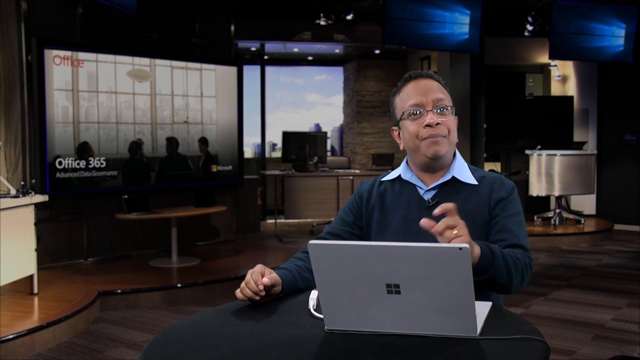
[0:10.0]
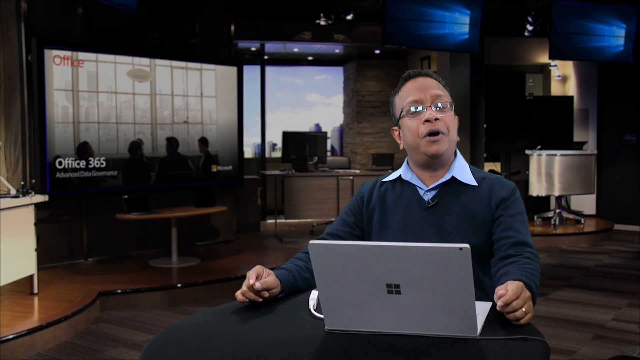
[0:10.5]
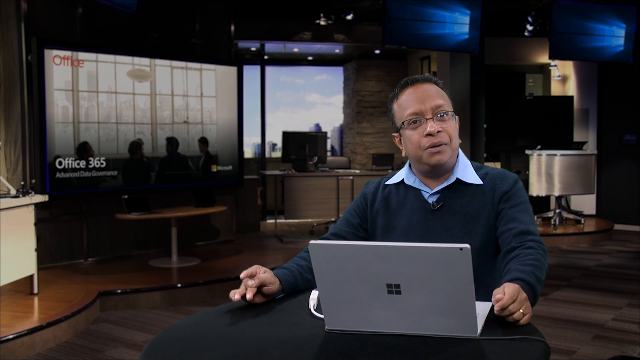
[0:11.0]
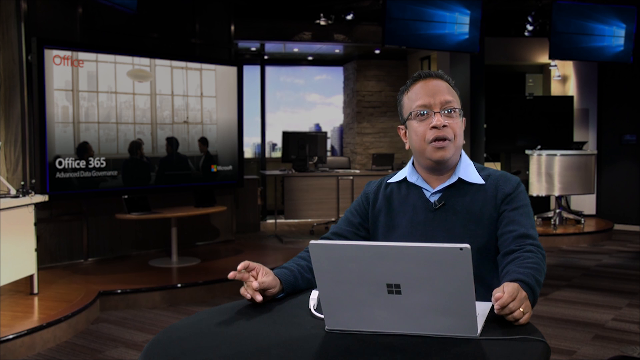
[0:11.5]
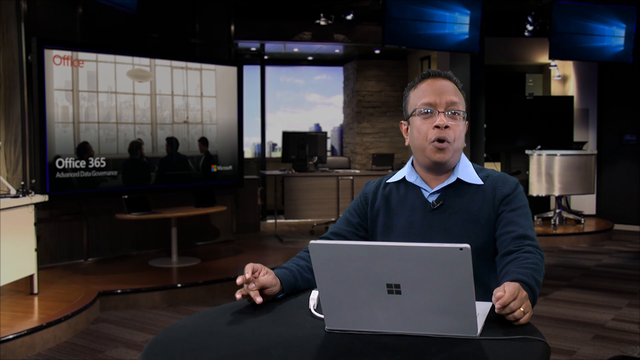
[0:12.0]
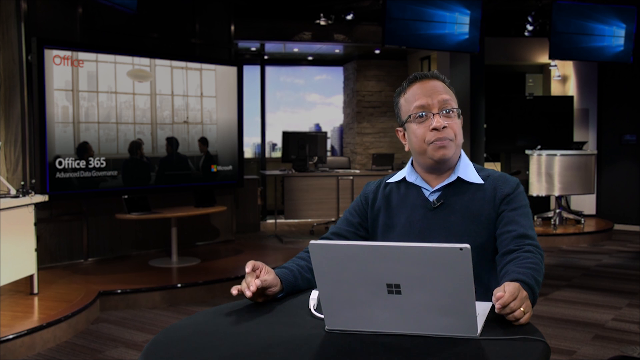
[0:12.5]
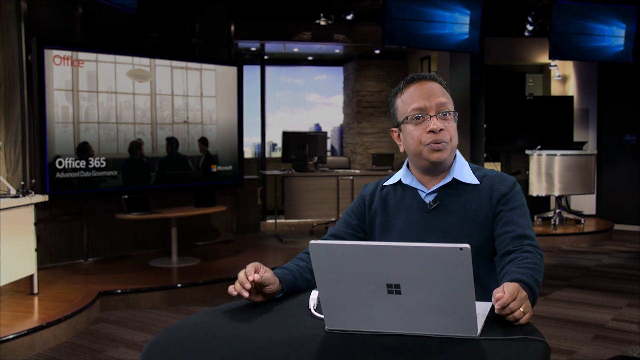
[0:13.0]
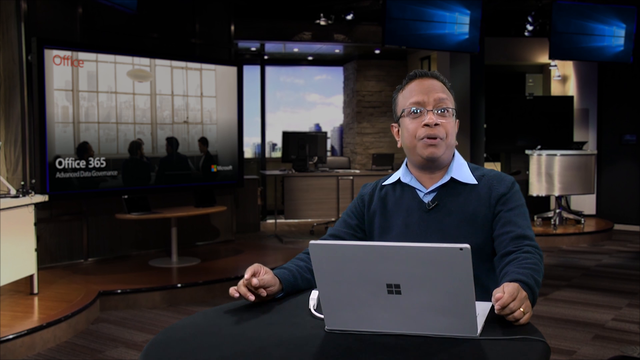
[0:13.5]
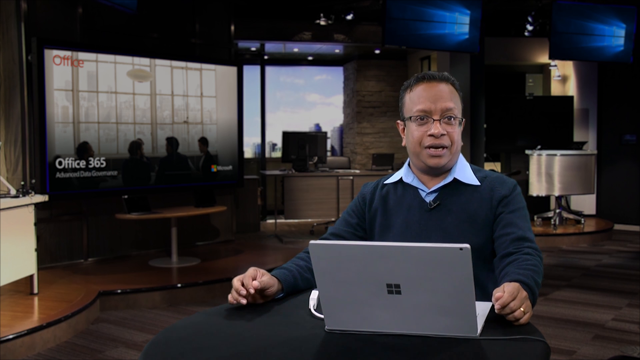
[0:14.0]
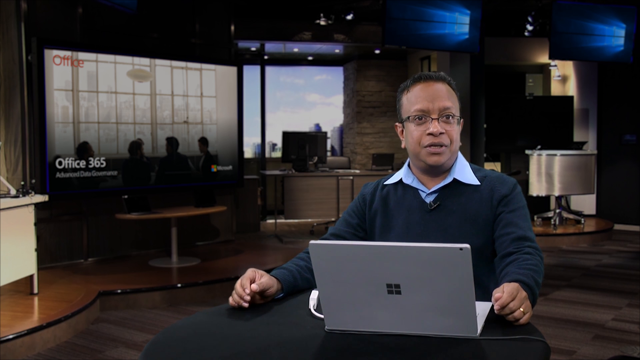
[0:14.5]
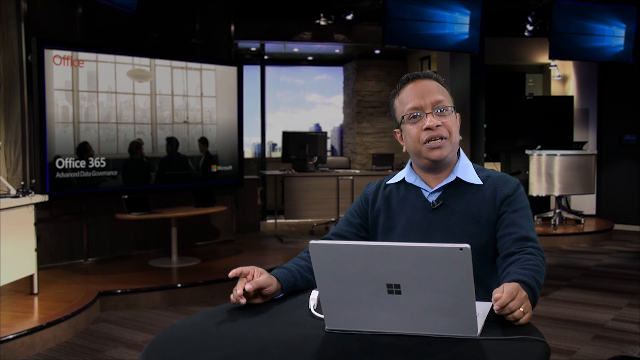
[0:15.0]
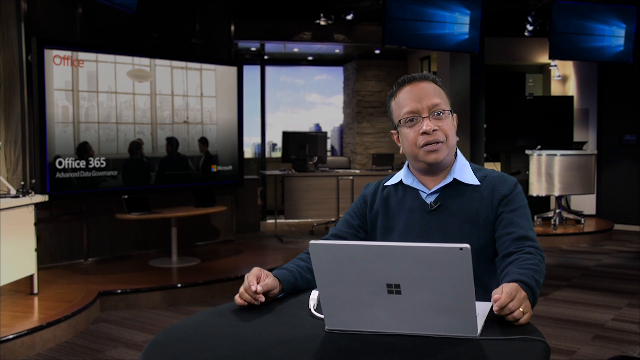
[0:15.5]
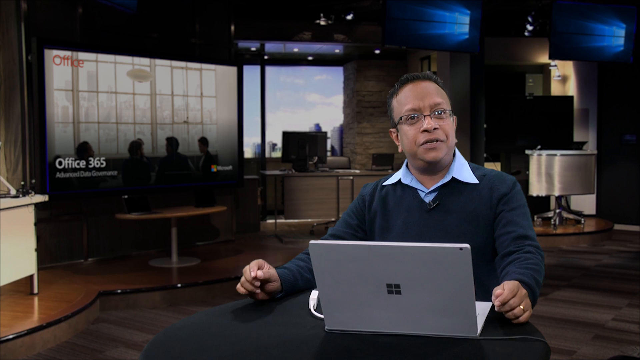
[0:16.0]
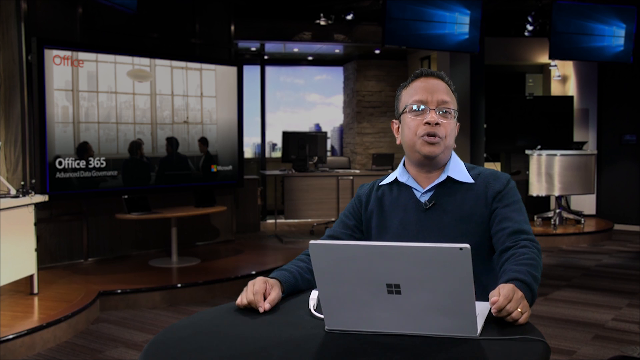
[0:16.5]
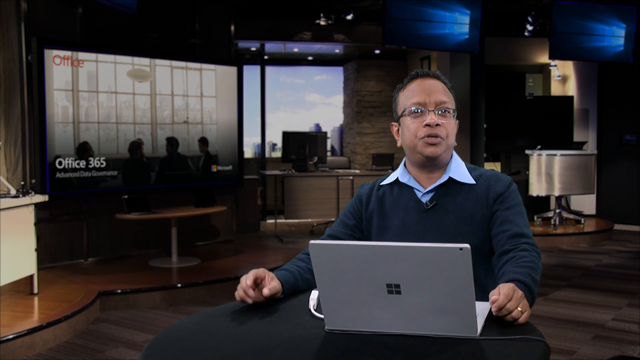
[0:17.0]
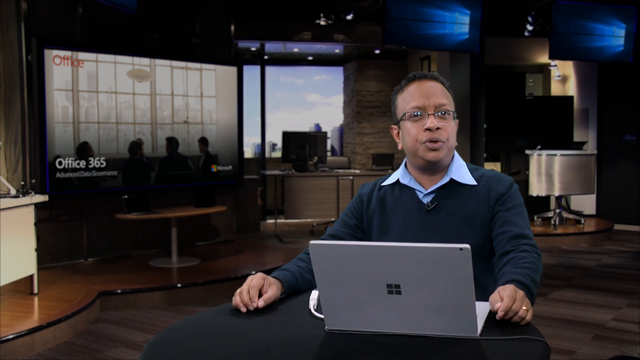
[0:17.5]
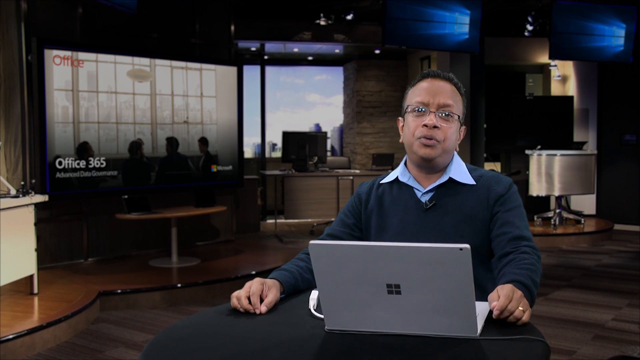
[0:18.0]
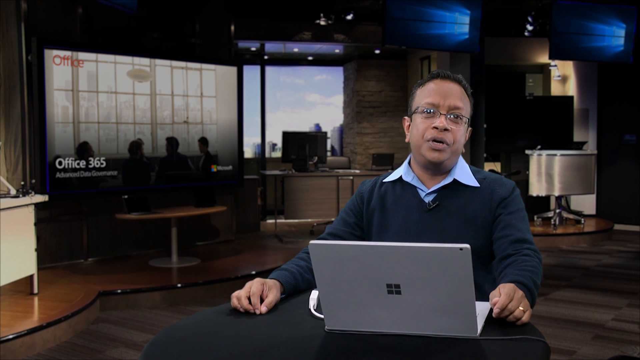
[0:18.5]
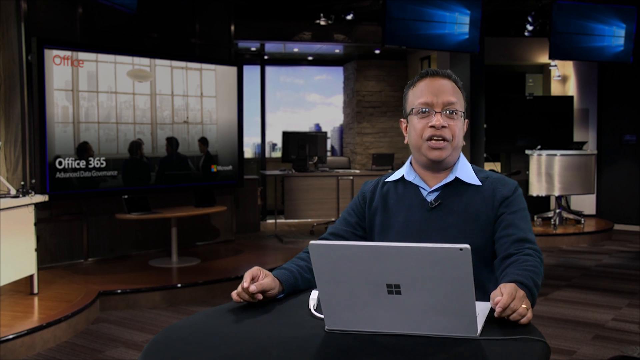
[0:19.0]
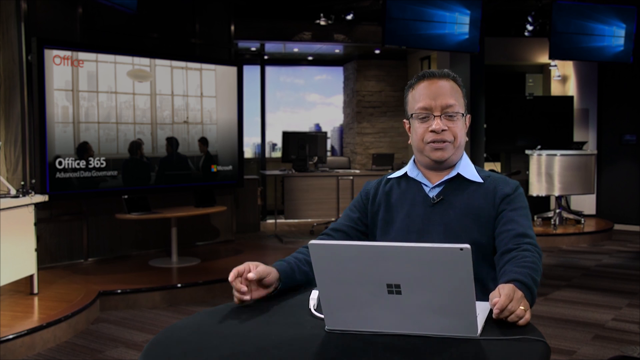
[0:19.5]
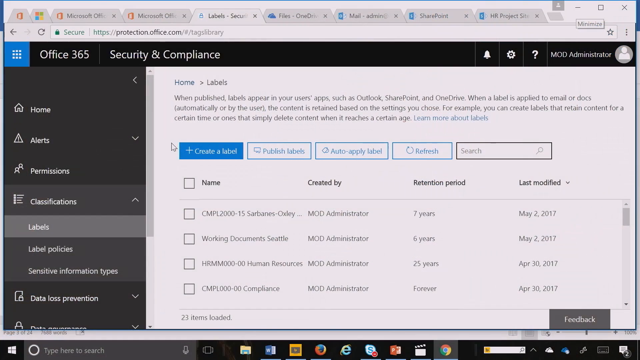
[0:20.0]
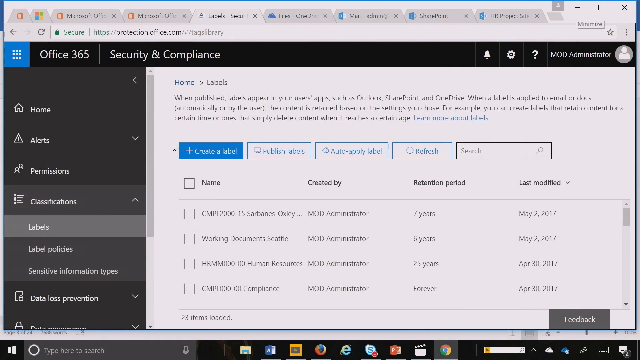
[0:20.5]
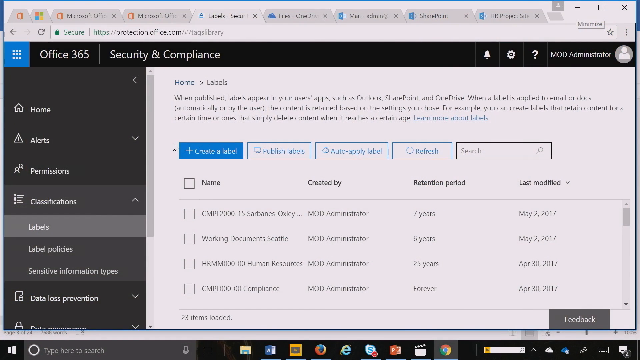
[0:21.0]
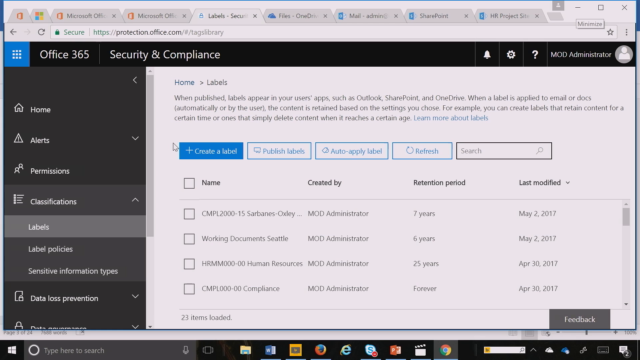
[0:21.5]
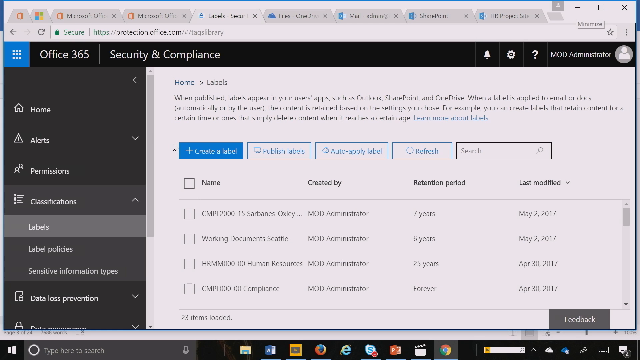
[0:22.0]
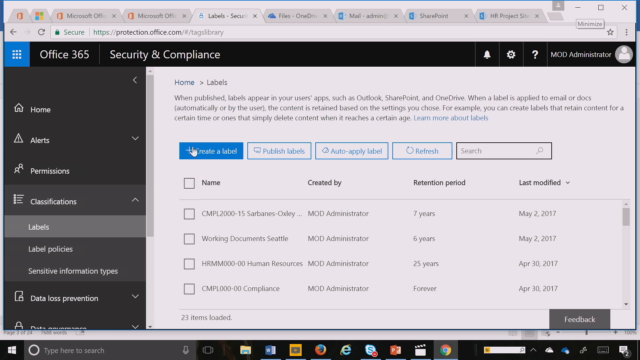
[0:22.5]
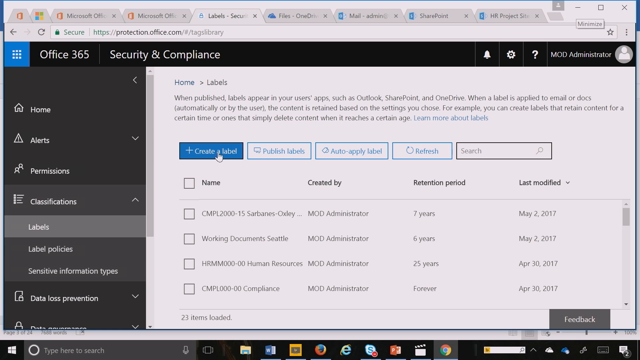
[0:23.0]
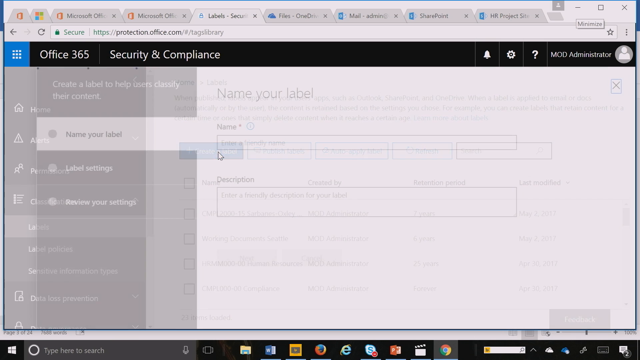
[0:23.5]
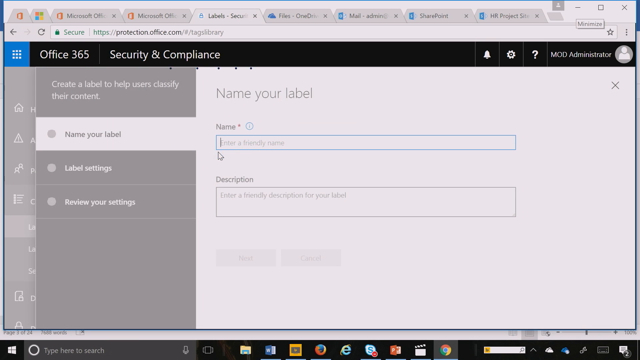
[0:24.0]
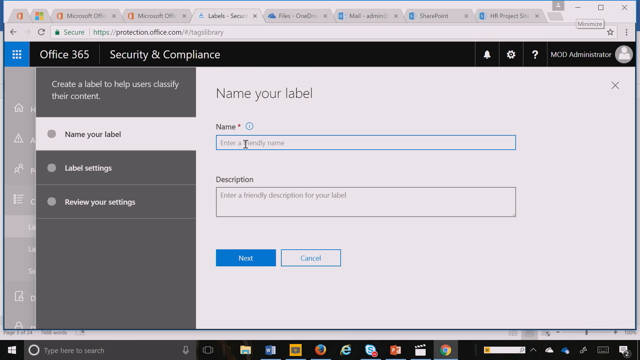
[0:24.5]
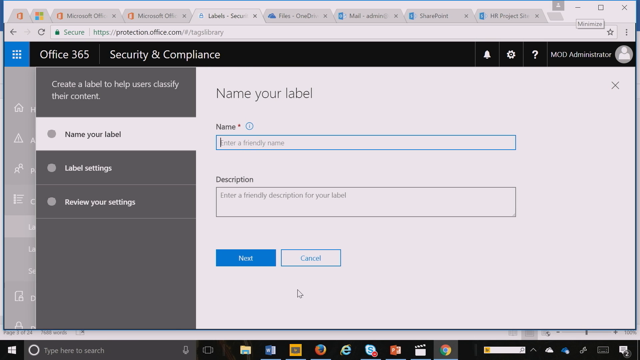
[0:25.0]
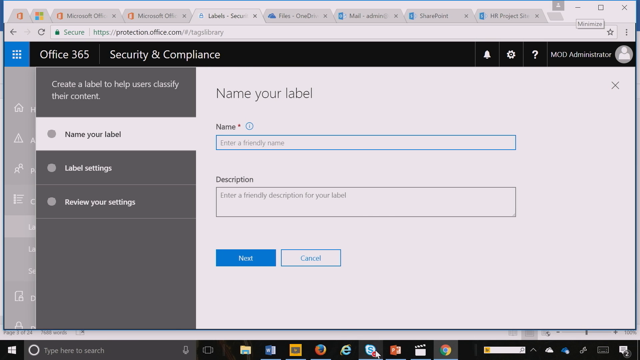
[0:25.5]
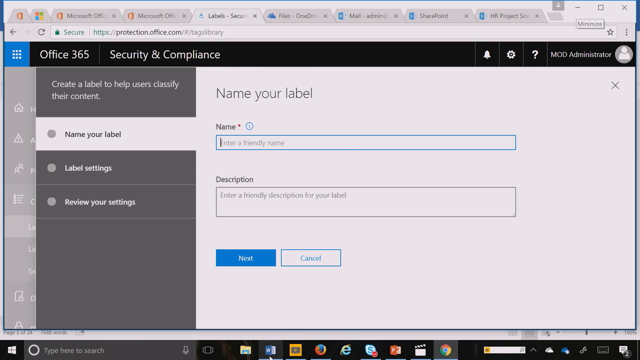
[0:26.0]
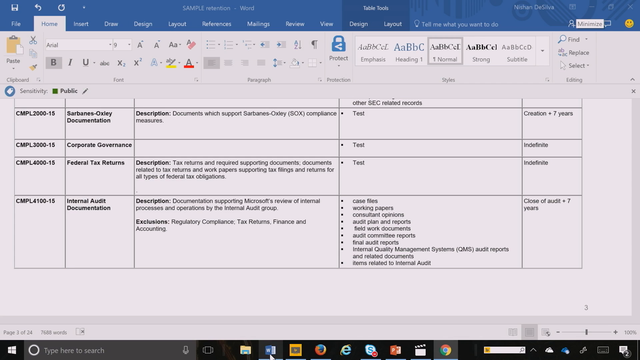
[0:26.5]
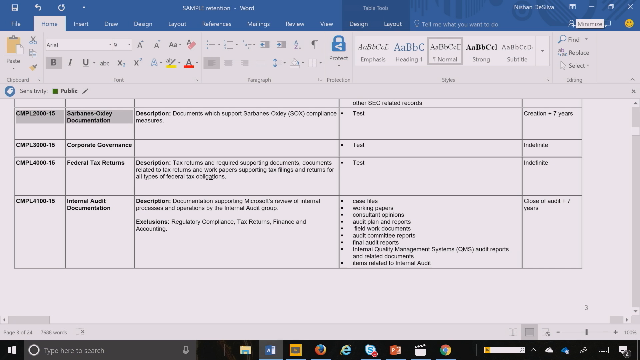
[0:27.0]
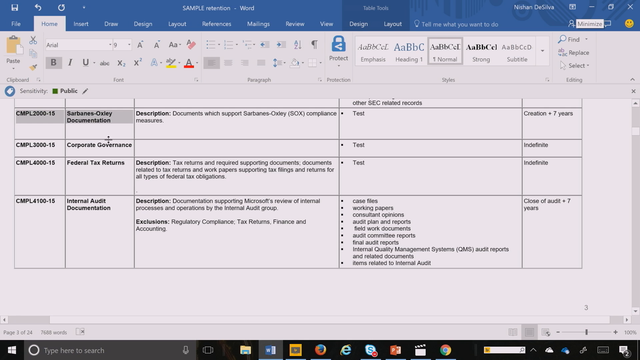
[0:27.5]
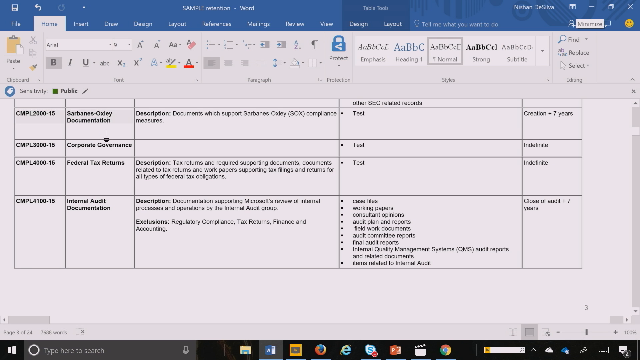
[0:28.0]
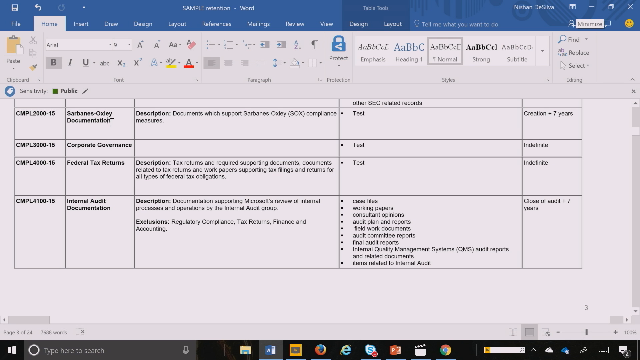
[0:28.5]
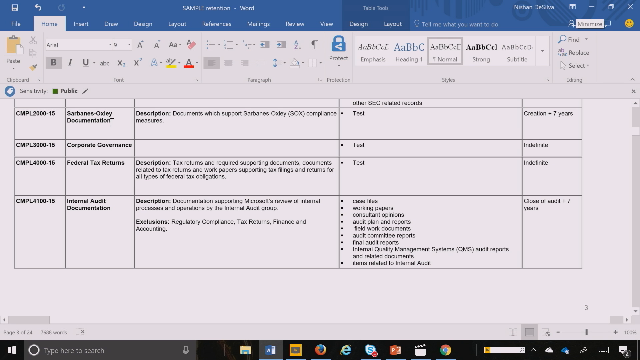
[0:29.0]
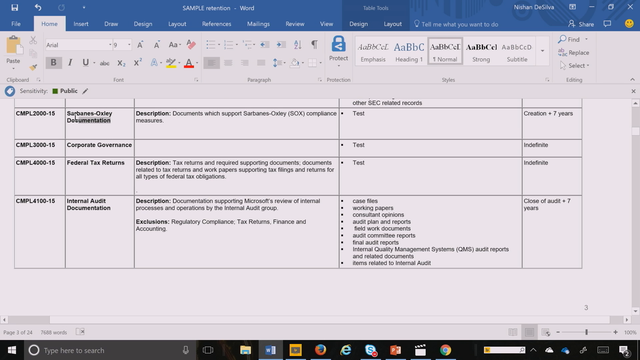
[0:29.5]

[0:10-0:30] A man seems to be sitting at a desk in front of a laptop that looks gray, and he appears to be talking to the camera. He wears a blue sweater with a light blue collared shirt whose collar sticks out, and glasses. He seems to wiggle his right fingers as he keeps talking, while his left hand rests on the desk. The desk appears to have a brown wooden countertop. The video cuts to a computer screen whose top header reads "office 365" in white text on a black bar, with "security and compliance" to the right of it. A menu is underneath, and "name your label" seems to have been clicked; text is being typed into the input box.